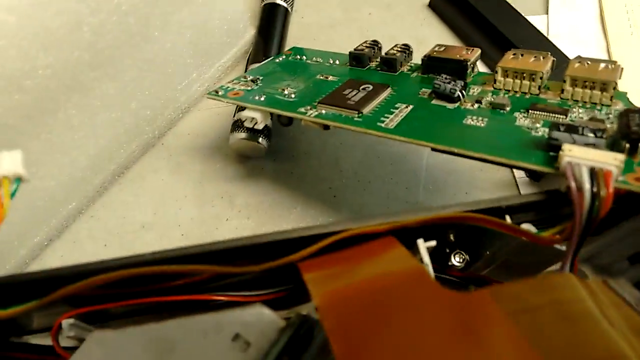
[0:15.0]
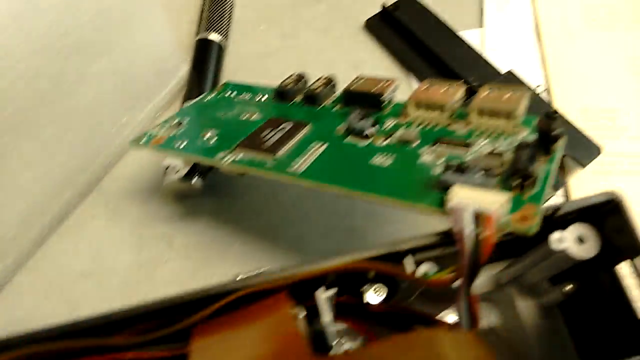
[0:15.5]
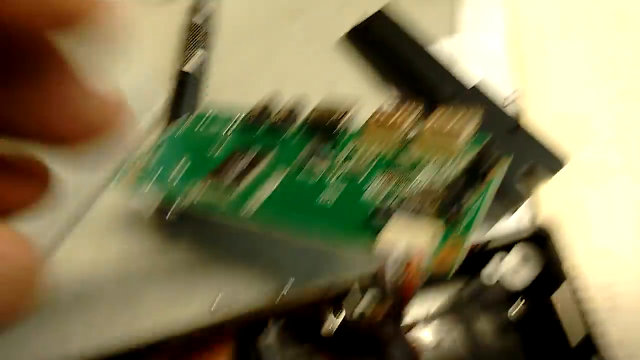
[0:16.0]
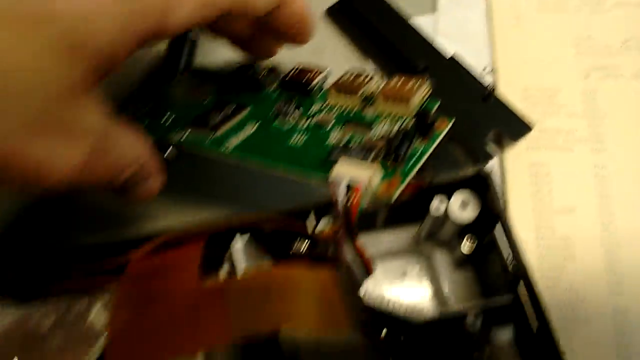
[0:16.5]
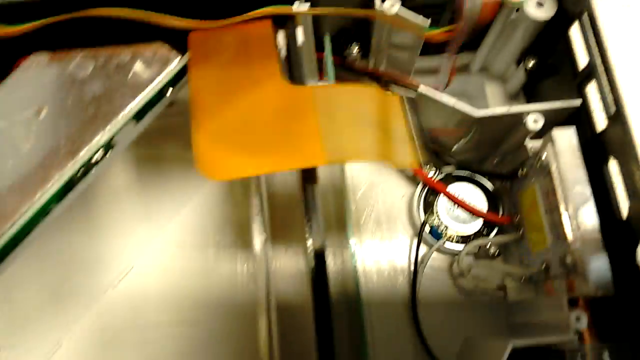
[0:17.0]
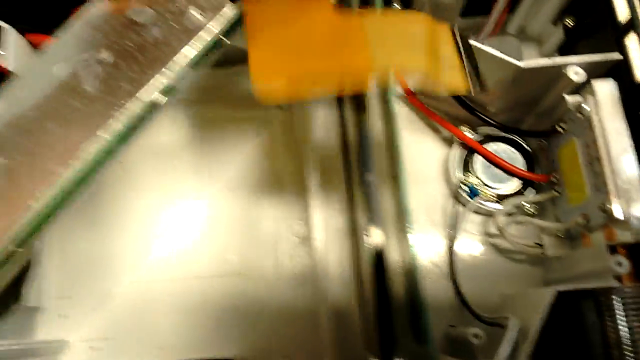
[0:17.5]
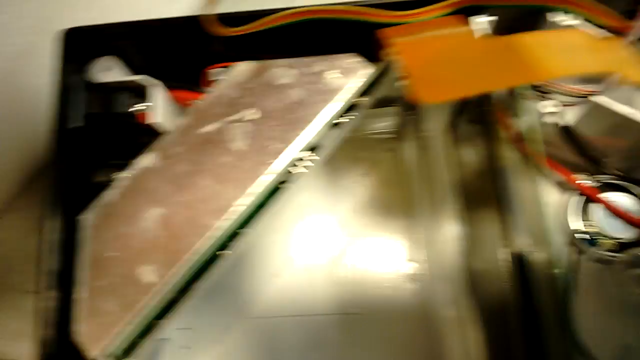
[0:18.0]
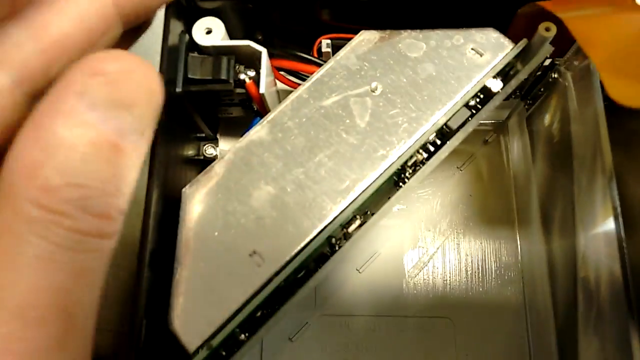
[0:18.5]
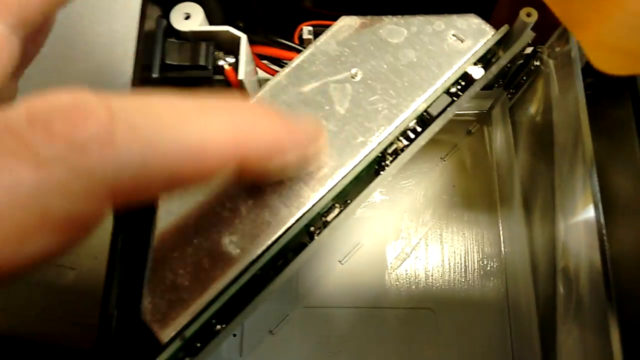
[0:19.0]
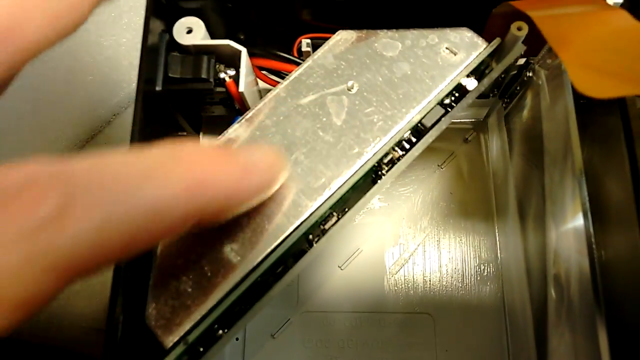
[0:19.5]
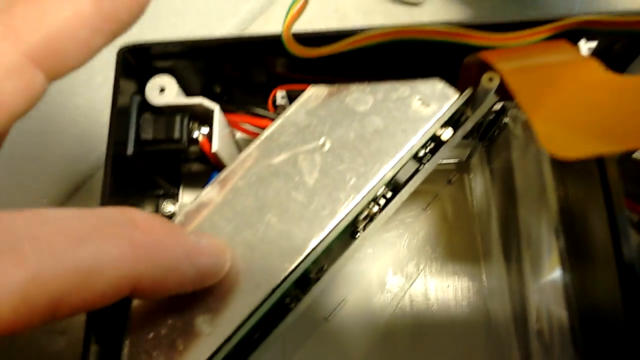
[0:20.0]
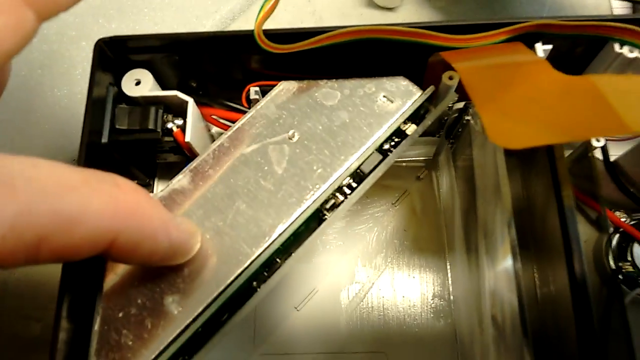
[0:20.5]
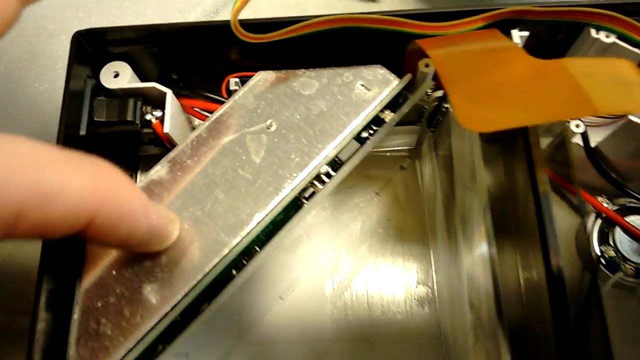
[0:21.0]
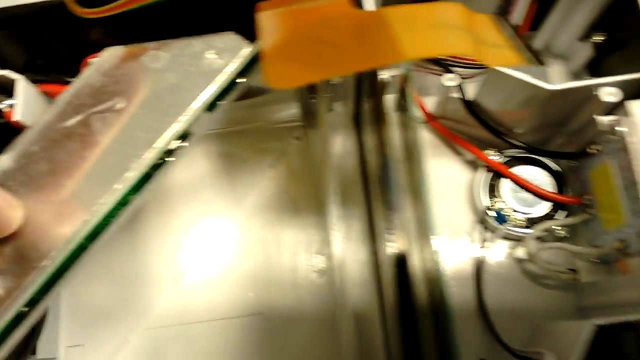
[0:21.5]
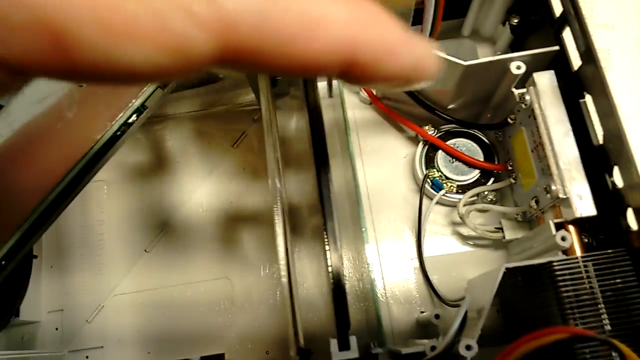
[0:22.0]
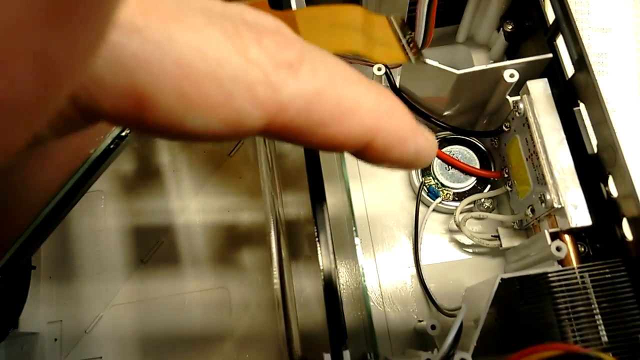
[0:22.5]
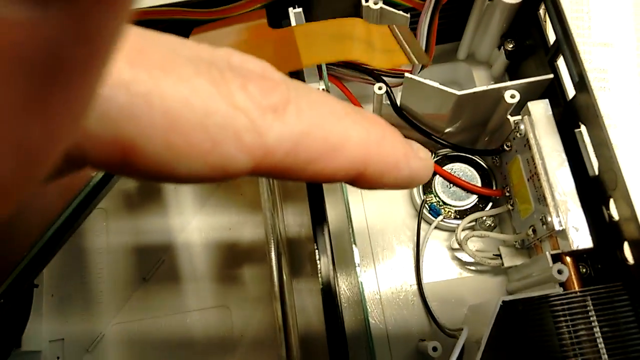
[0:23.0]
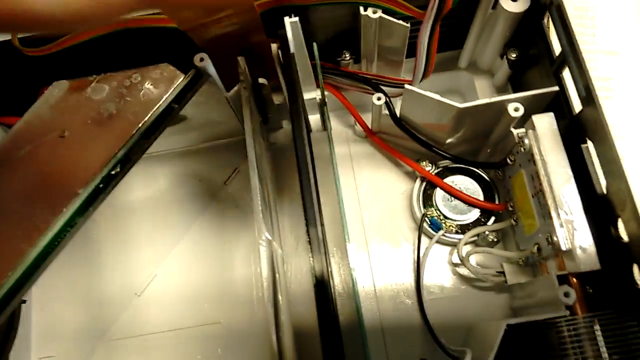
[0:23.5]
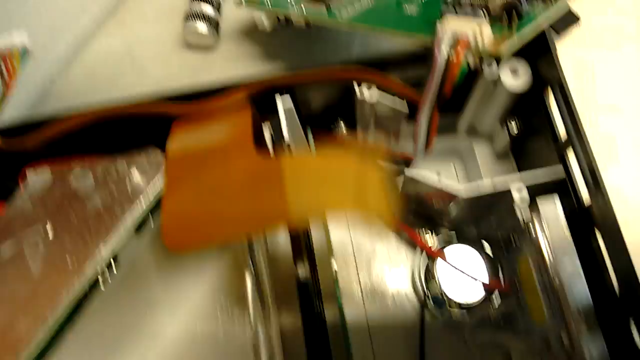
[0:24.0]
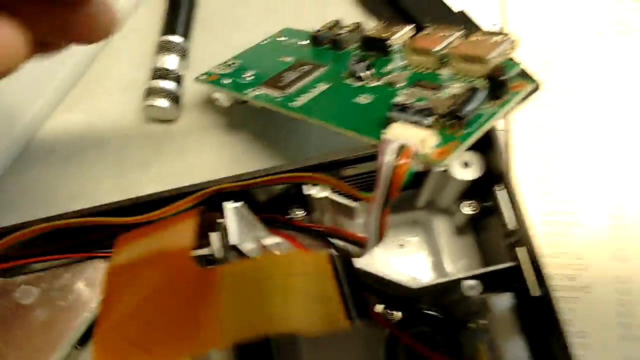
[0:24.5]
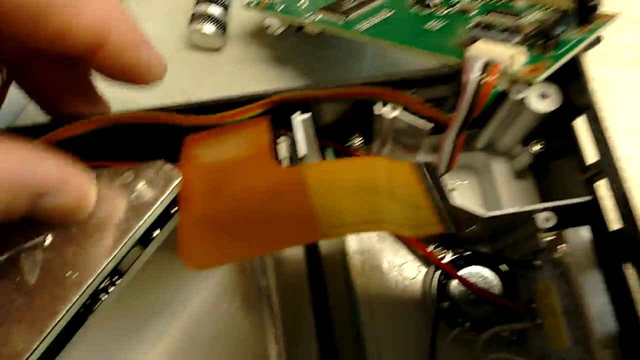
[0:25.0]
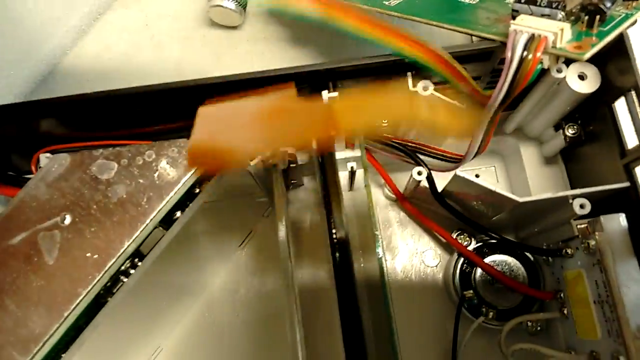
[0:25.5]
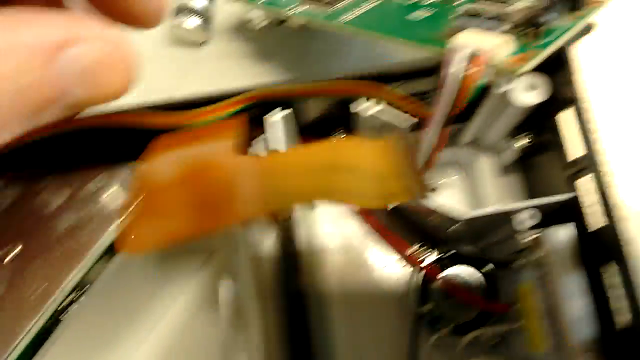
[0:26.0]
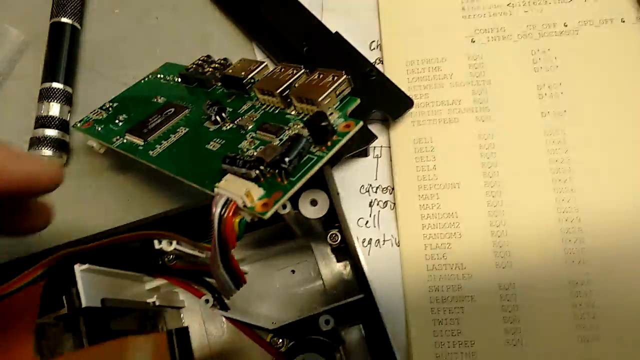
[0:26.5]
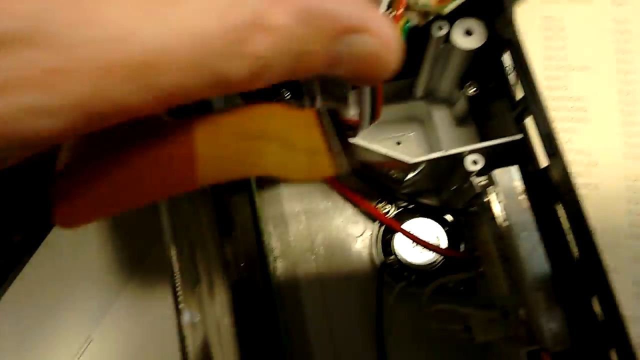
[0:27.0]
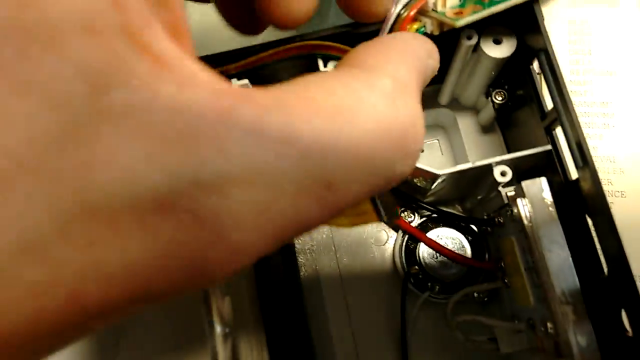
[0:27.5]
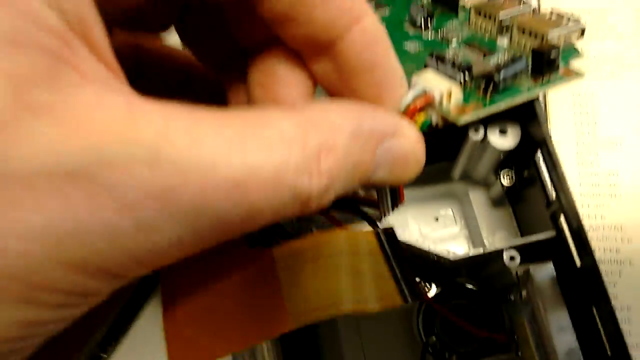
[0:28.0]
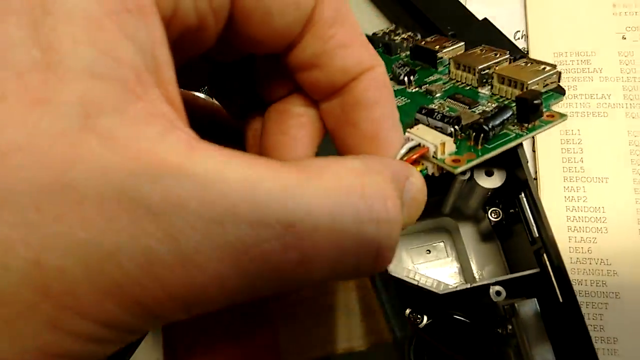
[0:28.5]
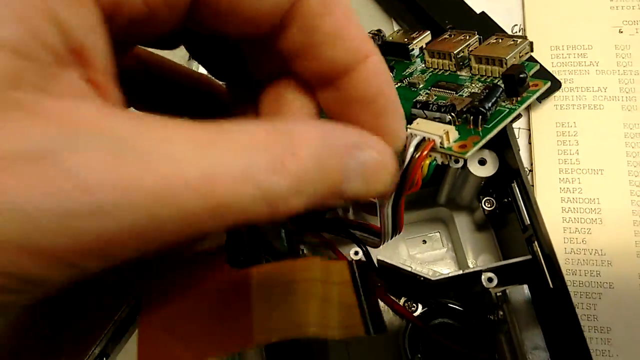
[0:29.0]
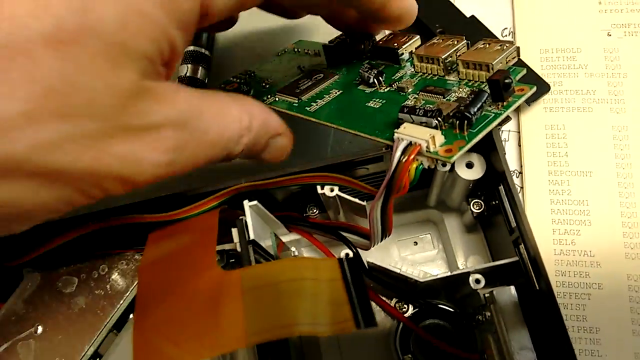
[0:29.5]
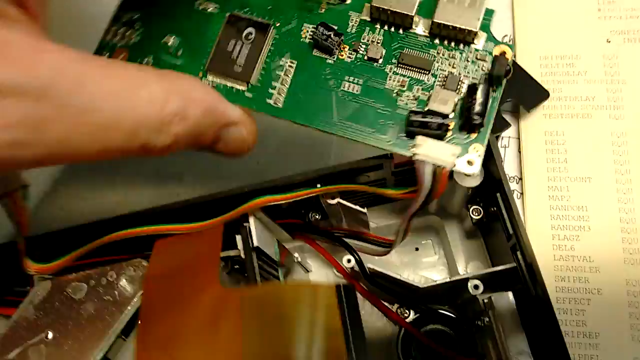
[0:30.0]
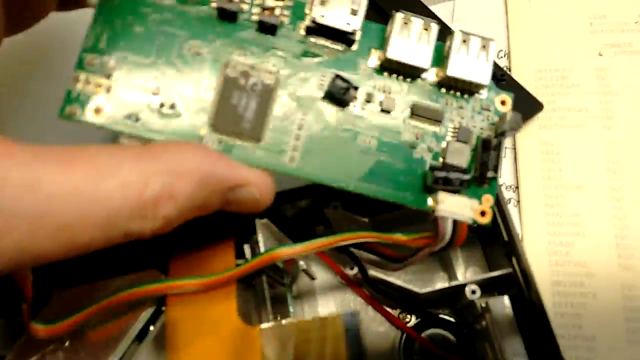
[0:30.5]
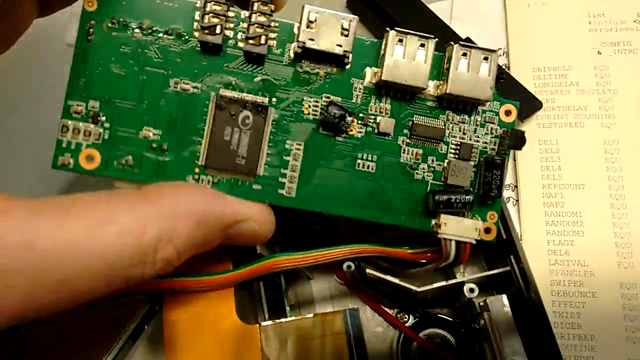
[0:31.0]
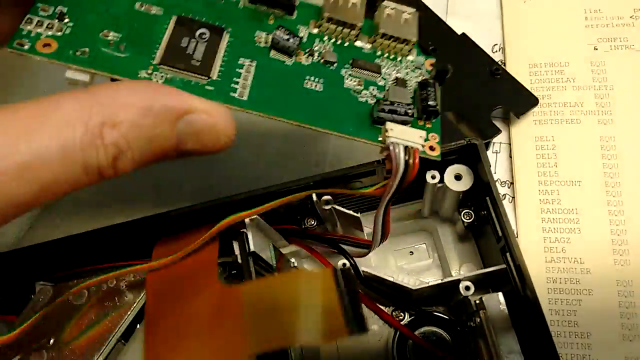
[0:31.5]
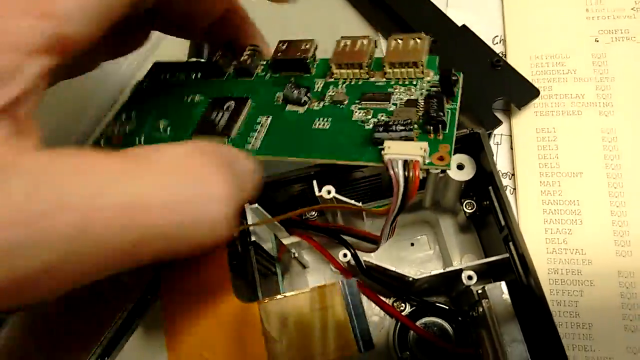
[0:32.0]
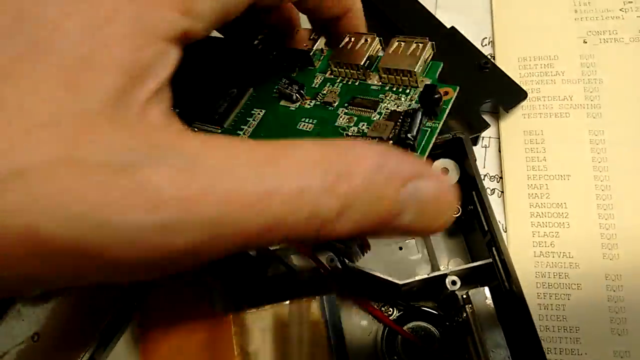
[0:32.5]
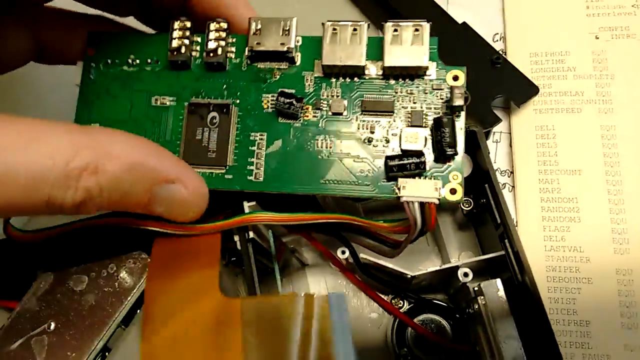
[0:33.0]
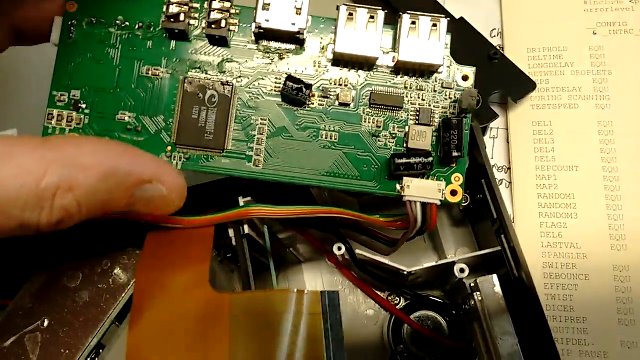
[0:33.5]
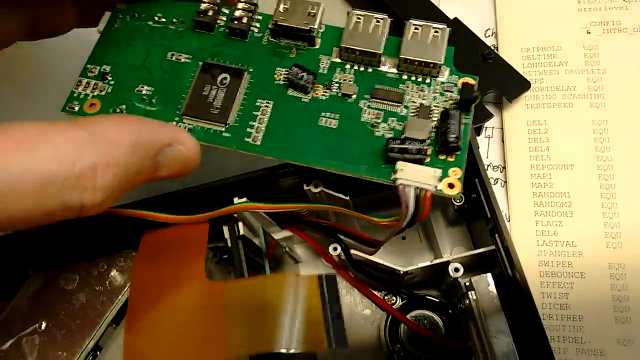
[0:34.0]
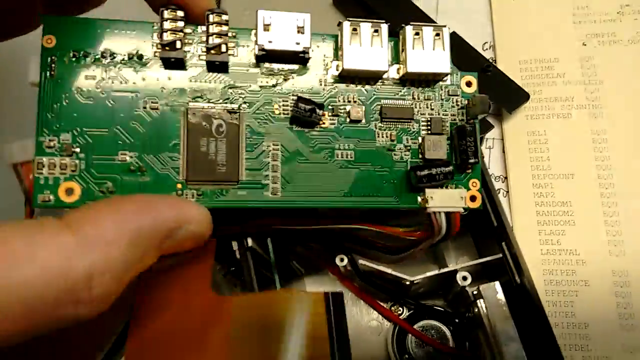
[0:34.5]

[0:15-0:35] A Caucasian male's hand points out the different components of the recording device, showing each piece of its inner workings rather than actually repairing it; the device is stated to be an inexpensive product. The camera pans over each part of the device: the wires, the metals, the motherboard, and the tools he is using. It also pans over papers and diagrams on the desk. The wires, the plugs, and everything else inside the device are shown.